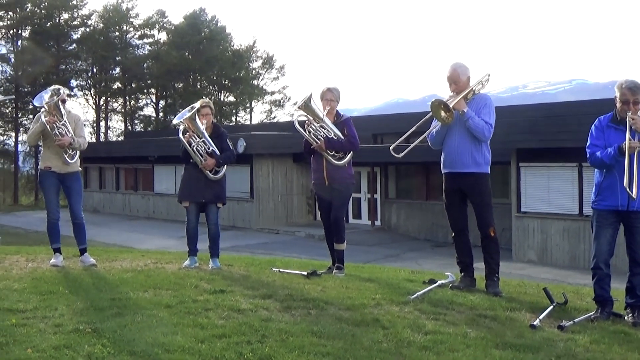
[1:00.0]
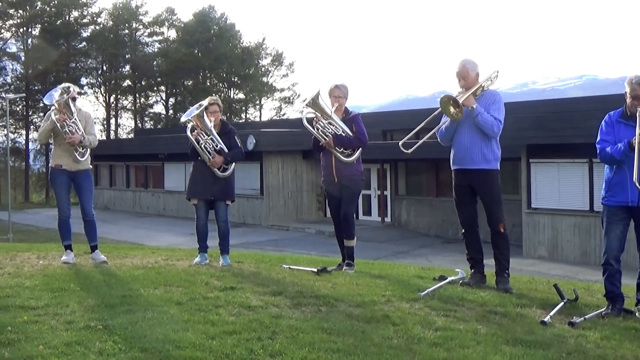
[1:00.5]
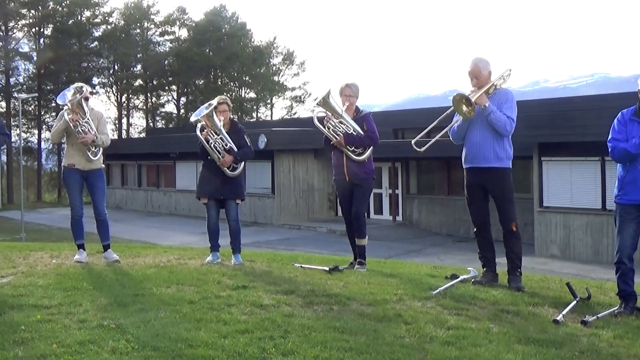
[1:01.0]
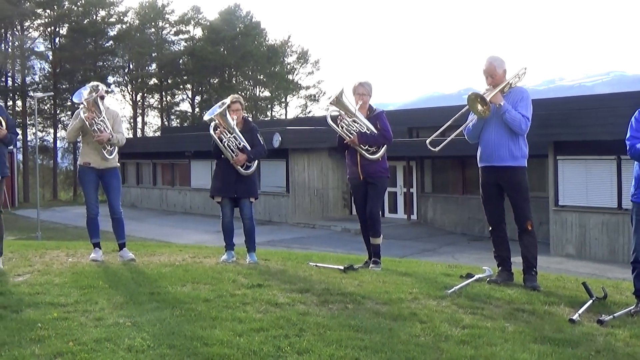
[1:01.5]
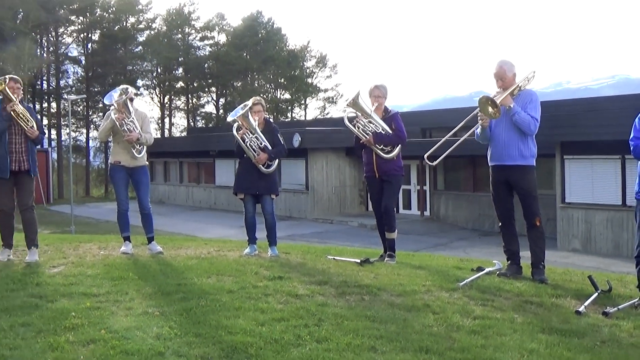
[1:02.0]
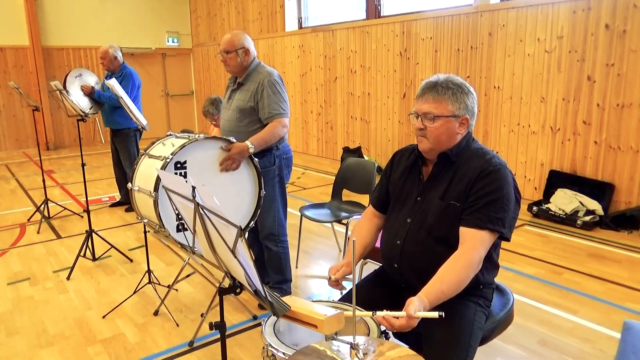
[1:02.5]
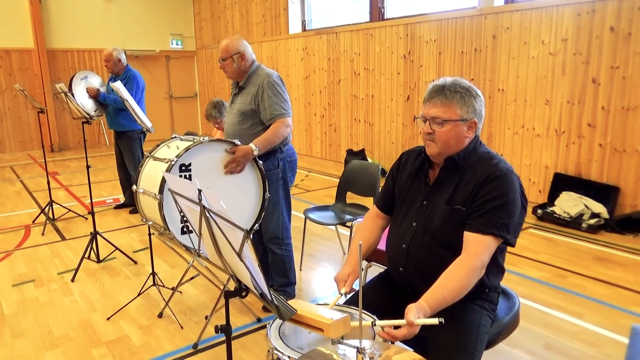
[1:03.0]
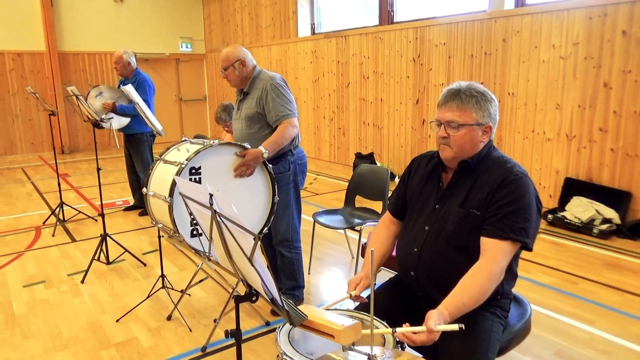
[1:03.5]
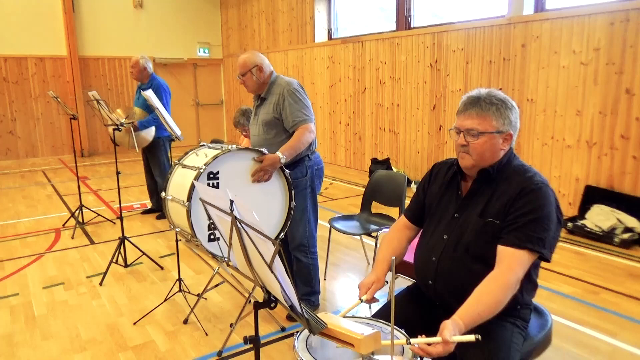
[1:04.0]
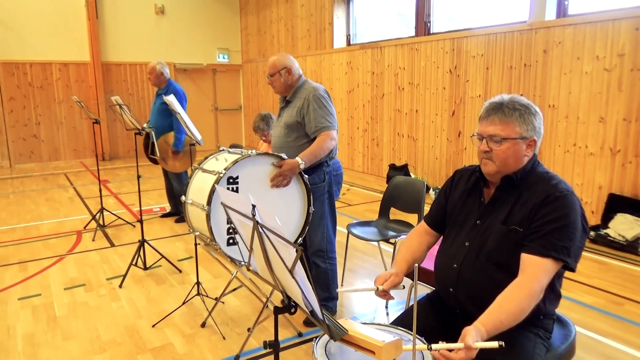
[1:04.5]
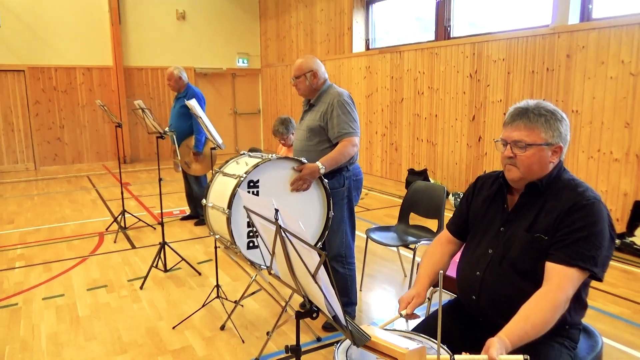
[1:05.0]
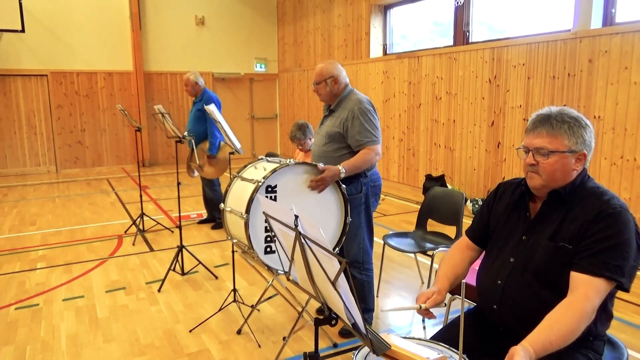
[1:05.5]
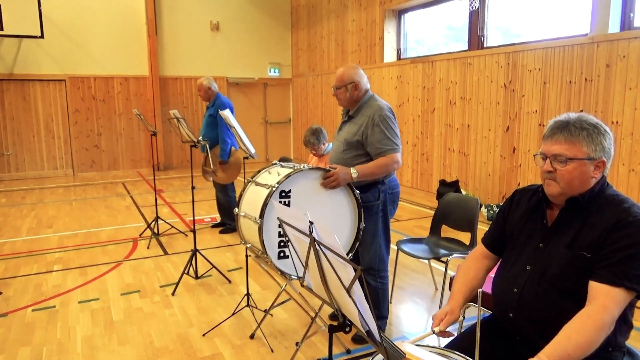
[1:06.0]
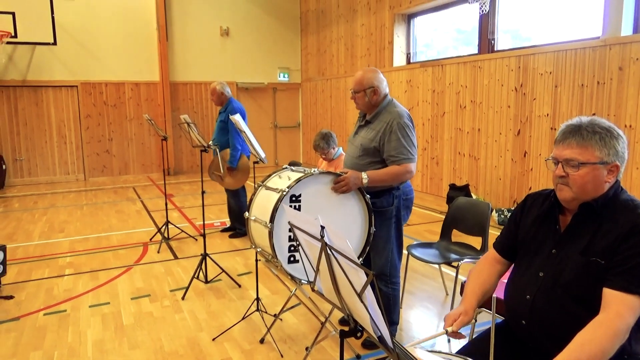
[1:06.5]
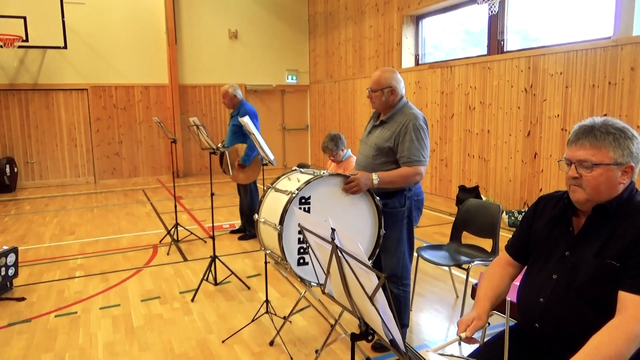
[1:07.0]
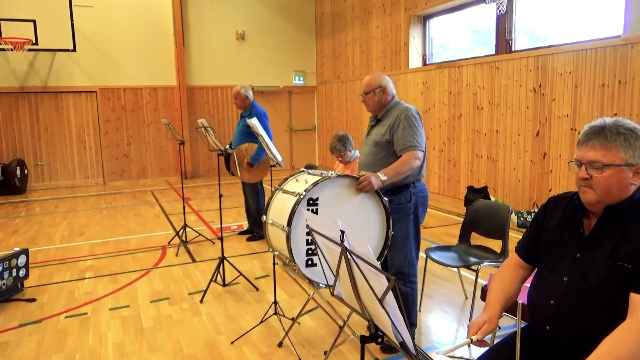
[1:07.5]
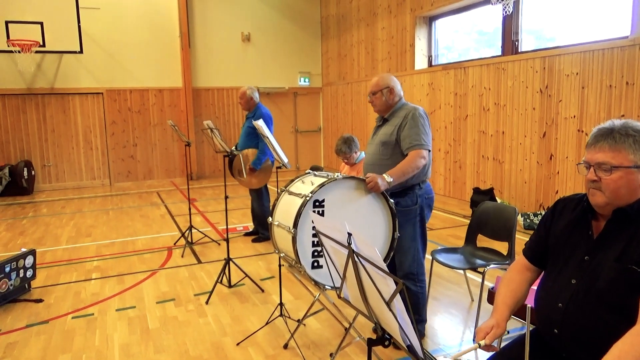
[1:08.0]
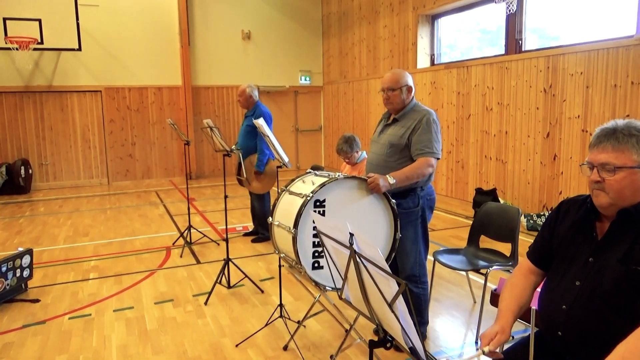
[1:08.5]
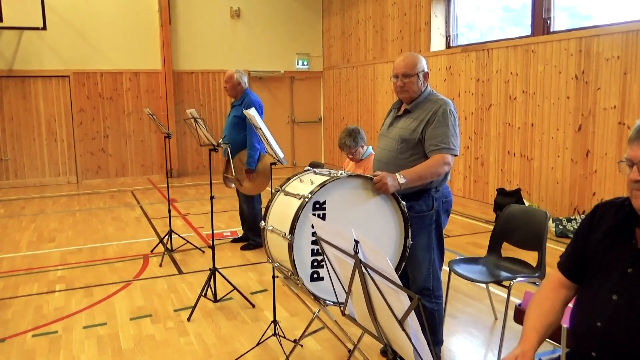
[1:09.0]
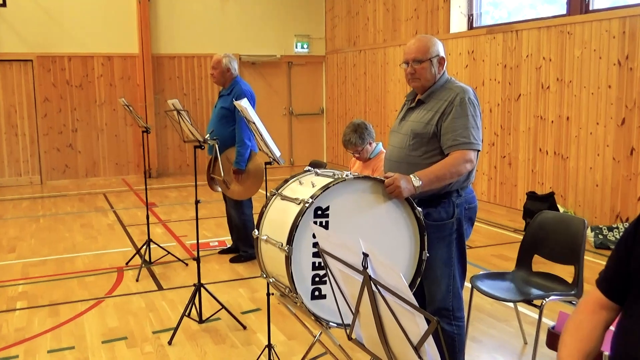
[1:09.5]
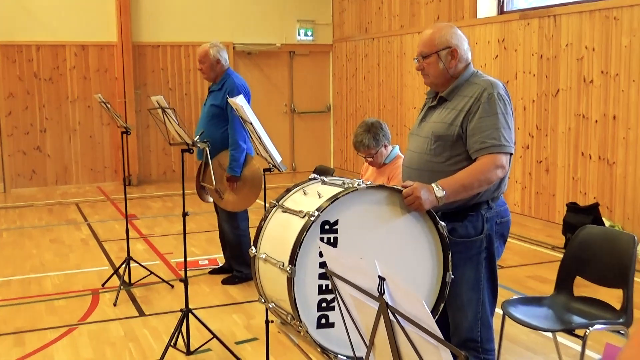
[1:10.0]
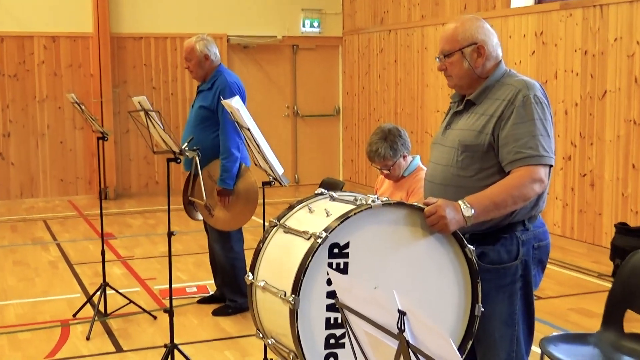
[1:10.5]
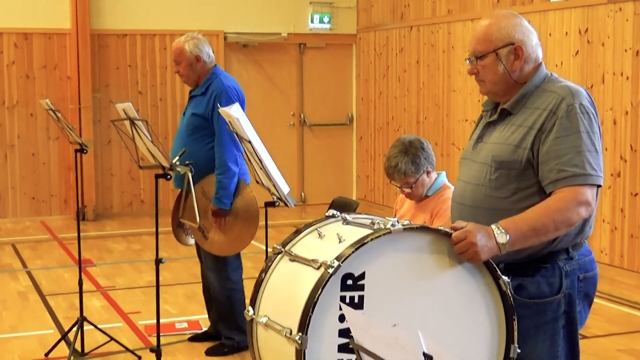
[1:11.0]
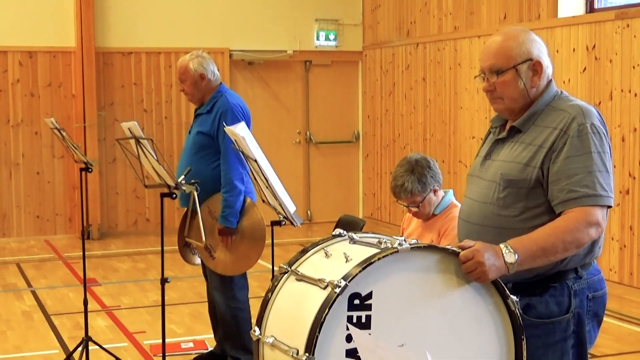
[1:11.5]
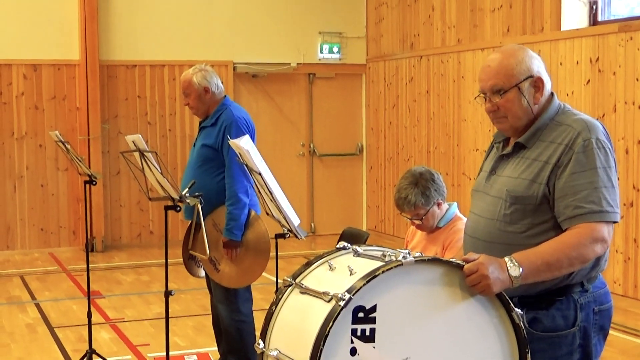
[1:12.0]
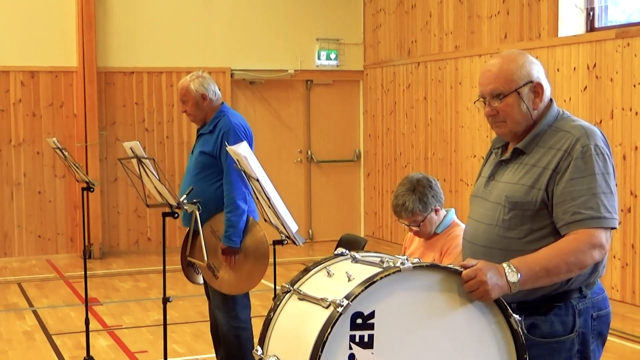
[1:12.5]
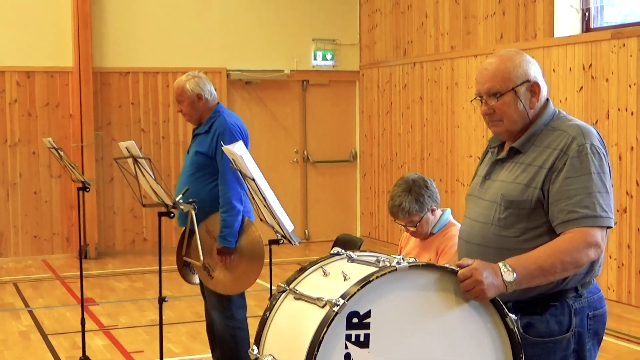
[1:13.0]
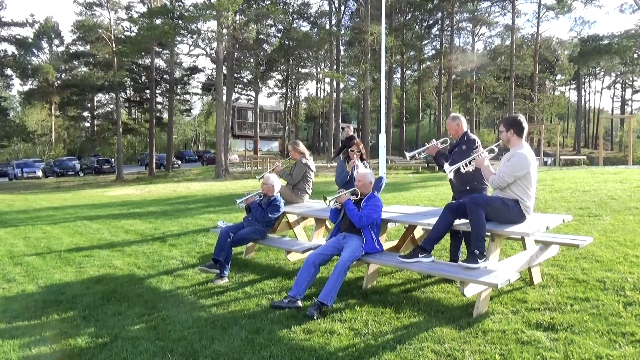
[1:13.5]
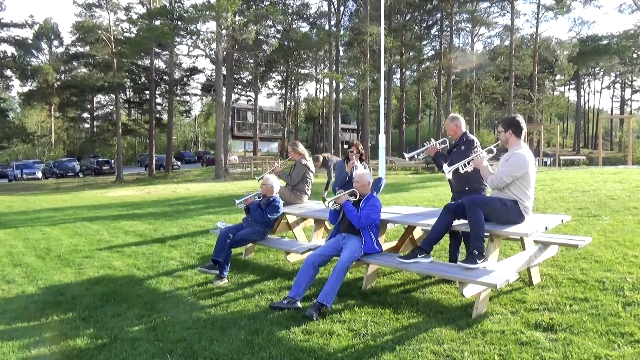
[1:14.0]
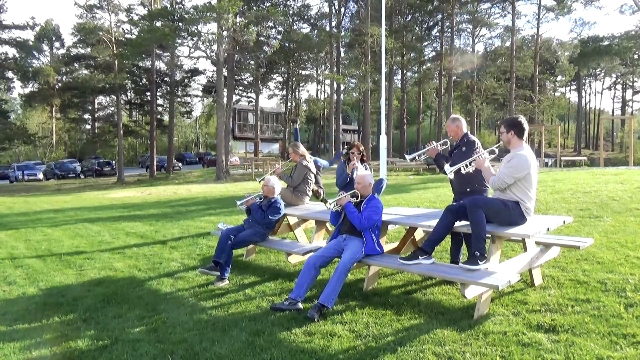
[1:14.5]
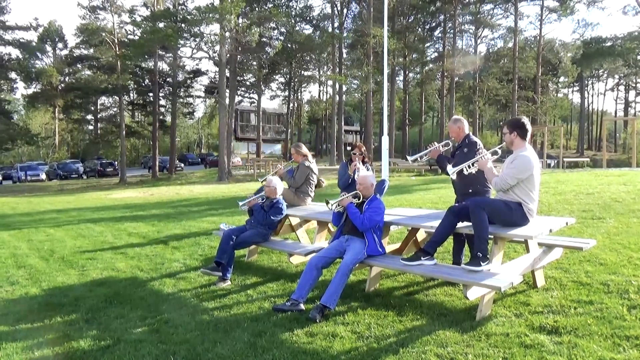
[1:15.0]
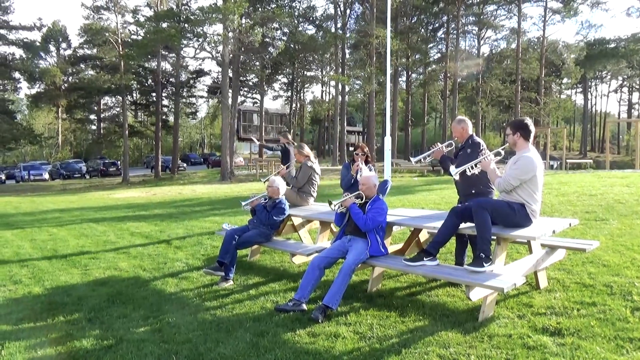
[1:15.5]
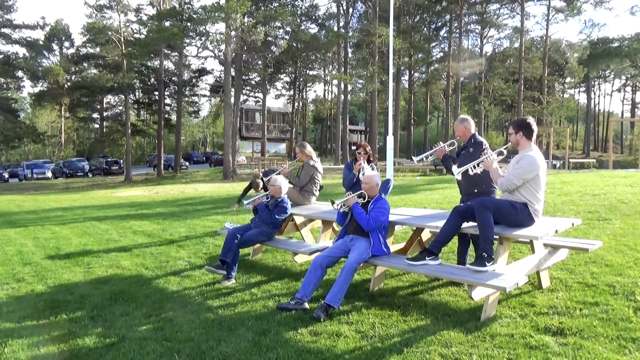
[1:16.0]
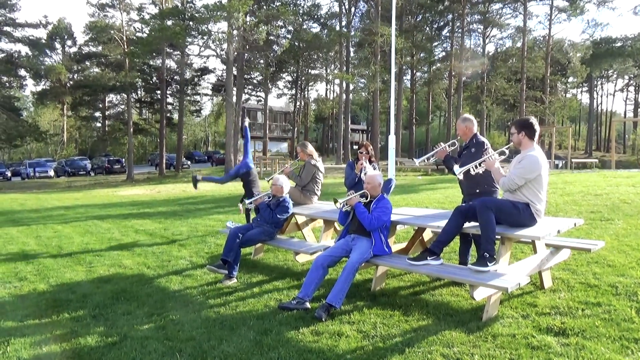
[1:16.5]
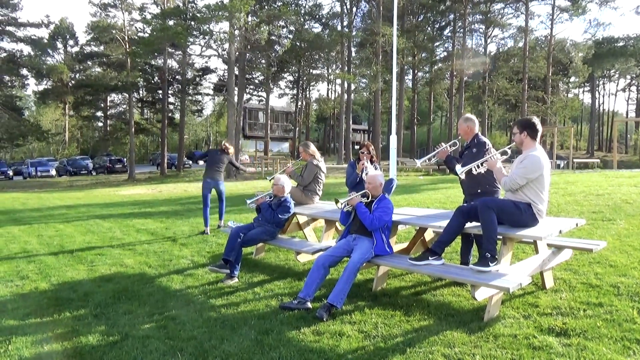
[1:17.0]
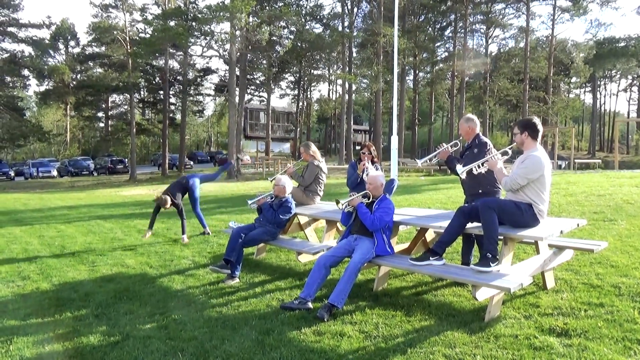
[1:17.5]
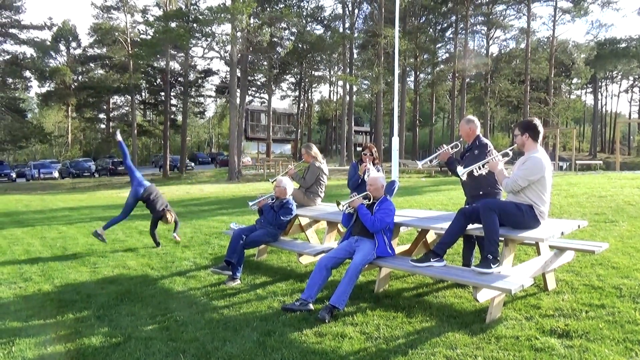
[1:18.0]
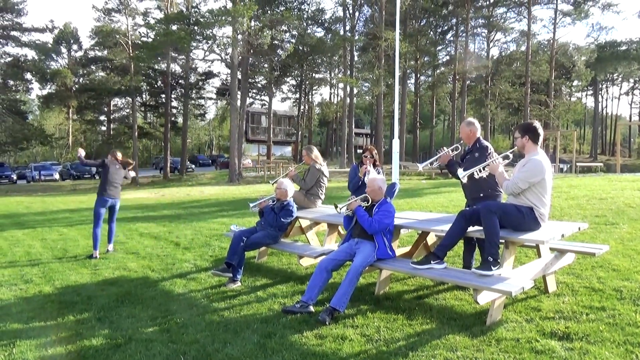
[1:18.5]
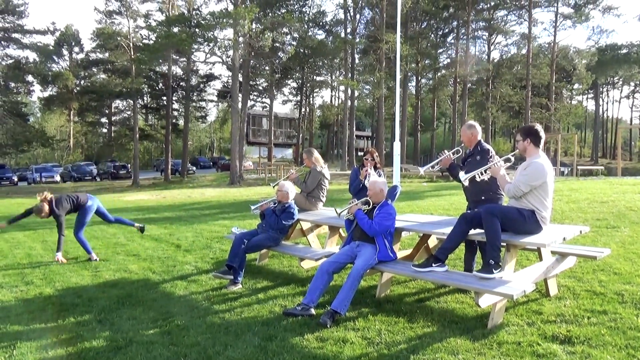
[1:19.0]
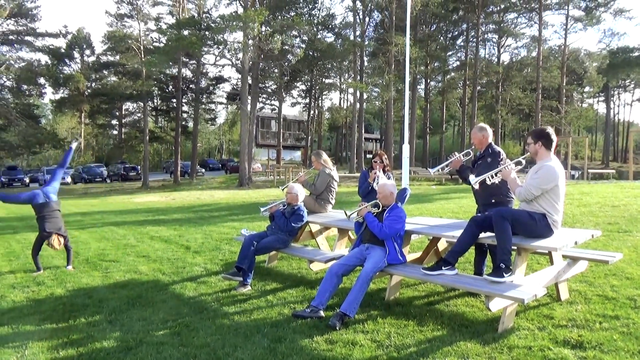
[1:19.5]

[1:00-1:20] A row of people stands on grass in front of a grey cement building, with trees in the background on the left and mountain peaks on the right. All of them wear pants and hold brass instruments that they play together. The video cuts to several people inside a basketball court with brown wood paneling on the walls, playing percussion instruments. The man in the blue shirt on the far end holds a pair of cymbals, the man in the middle plays a large white bass drum, and the man on the right in the black shirt plays the snare drum. The video zooms in on the man playing the bass drum. It then cuts to several people sitting on a park bench on a large grass field, playing their brass instruments, which are all trumpets. A person cartwheels in the background.